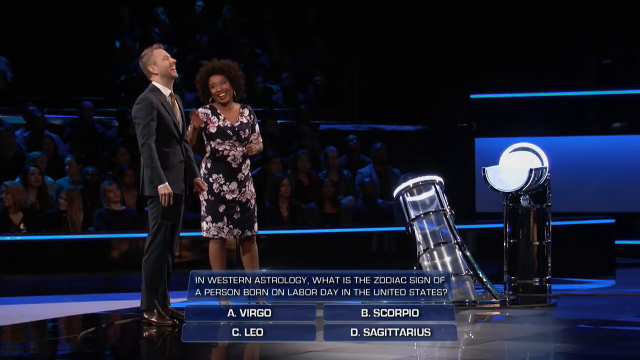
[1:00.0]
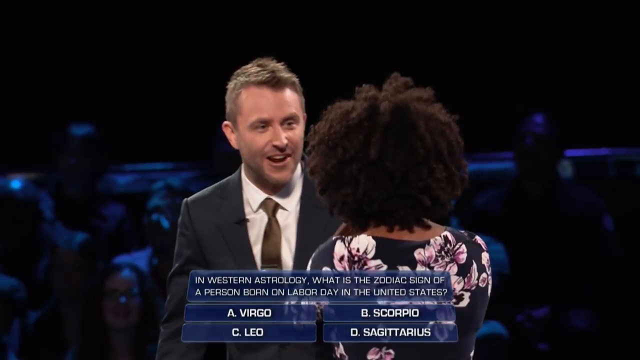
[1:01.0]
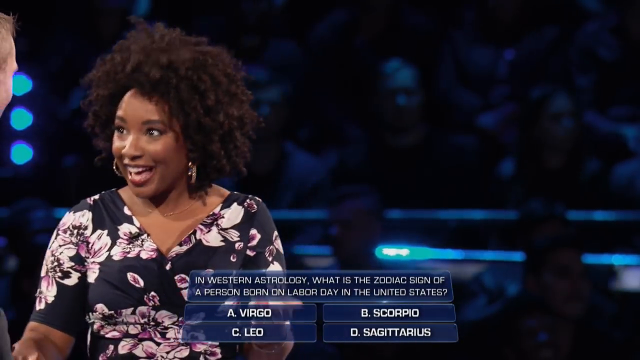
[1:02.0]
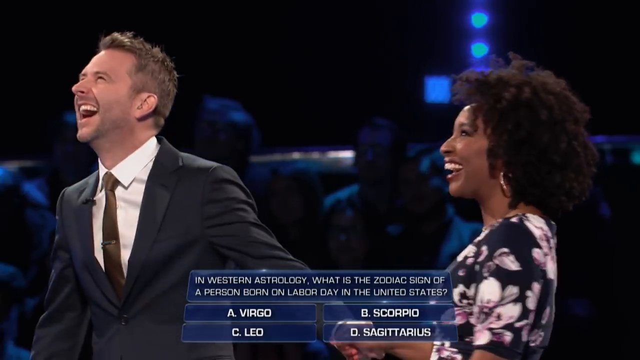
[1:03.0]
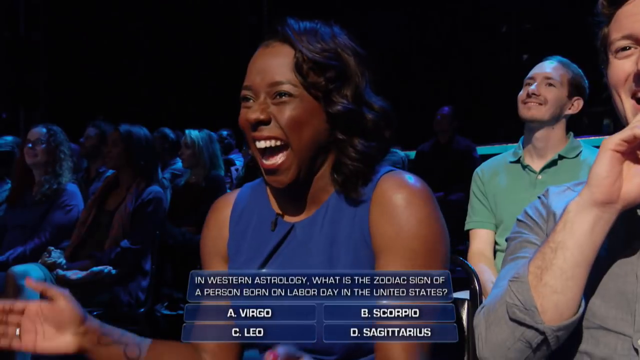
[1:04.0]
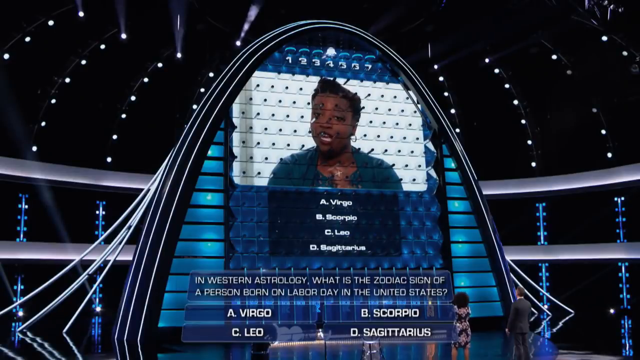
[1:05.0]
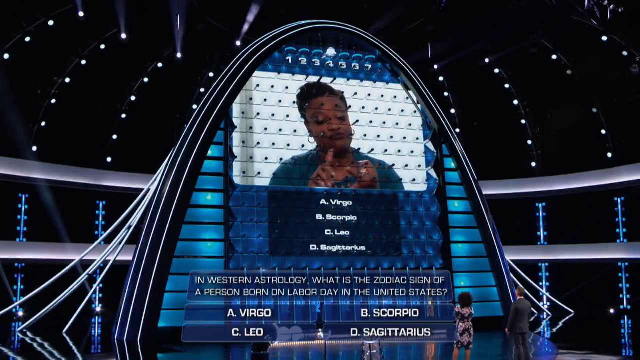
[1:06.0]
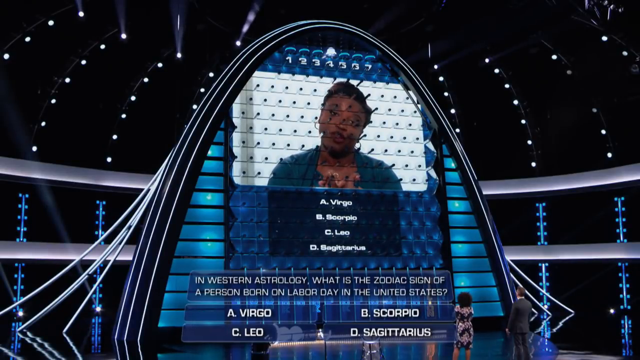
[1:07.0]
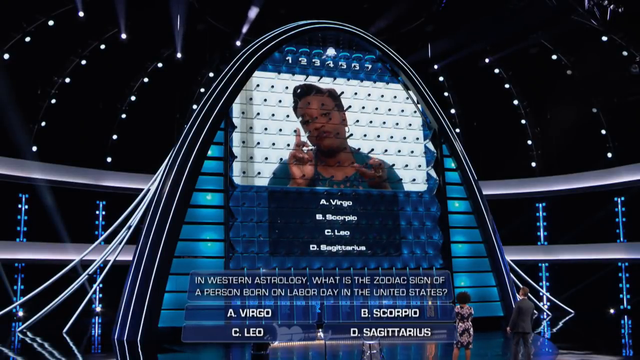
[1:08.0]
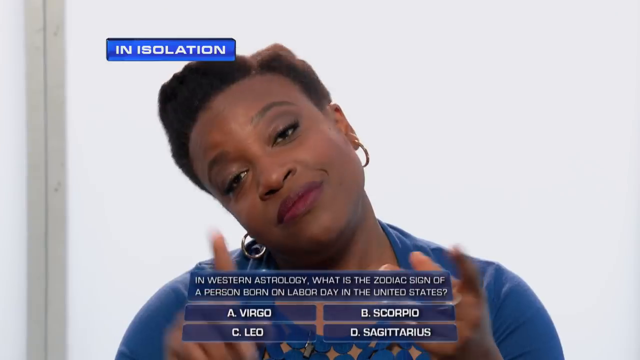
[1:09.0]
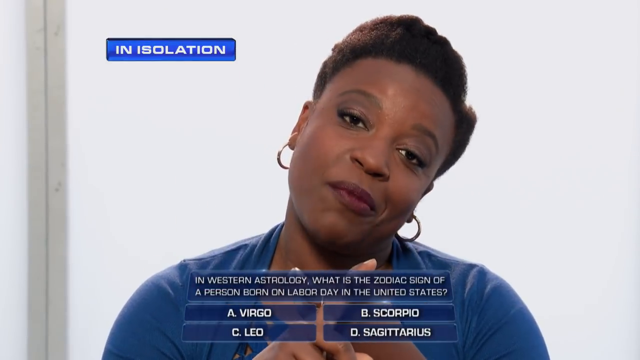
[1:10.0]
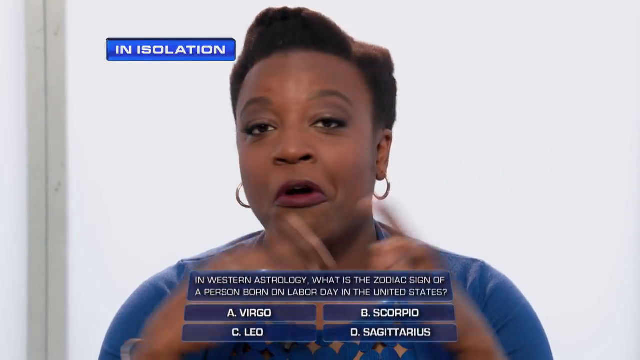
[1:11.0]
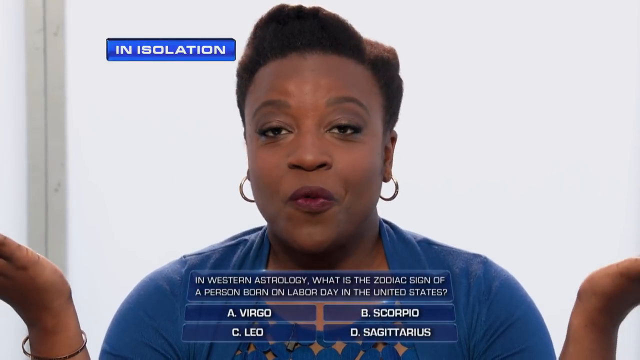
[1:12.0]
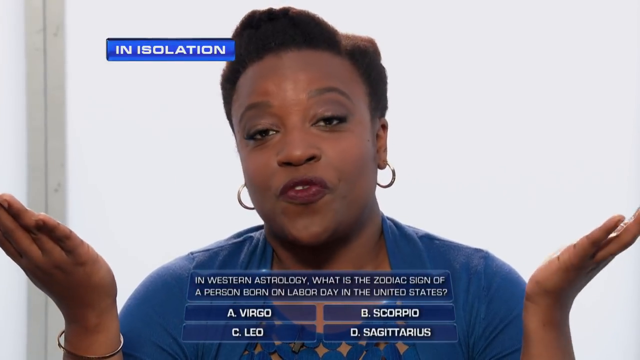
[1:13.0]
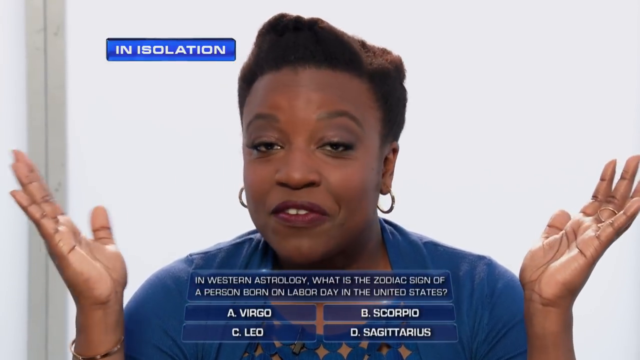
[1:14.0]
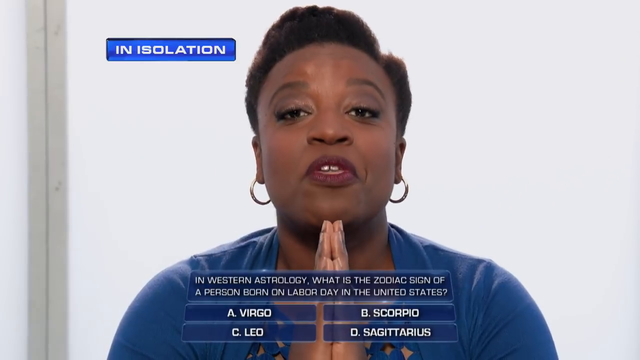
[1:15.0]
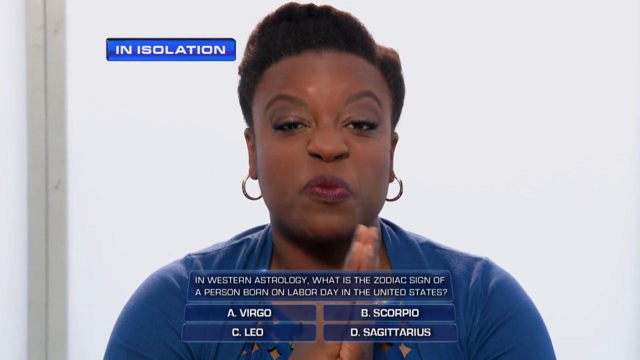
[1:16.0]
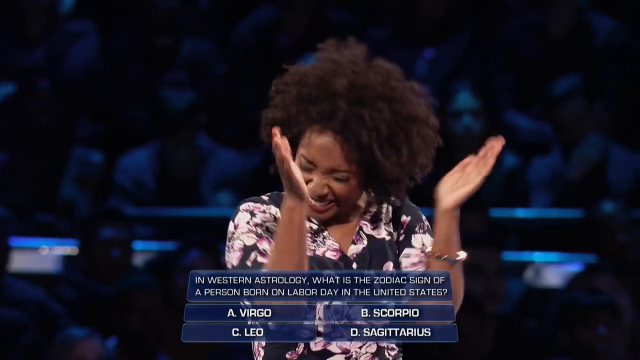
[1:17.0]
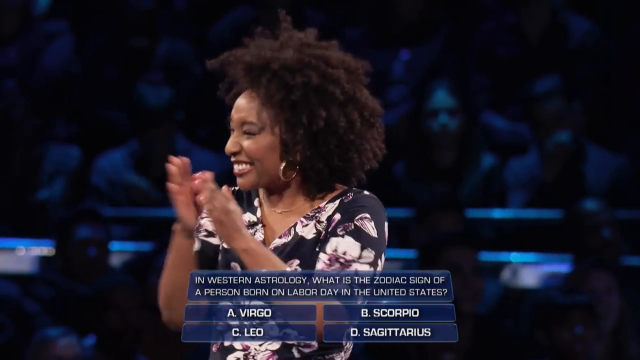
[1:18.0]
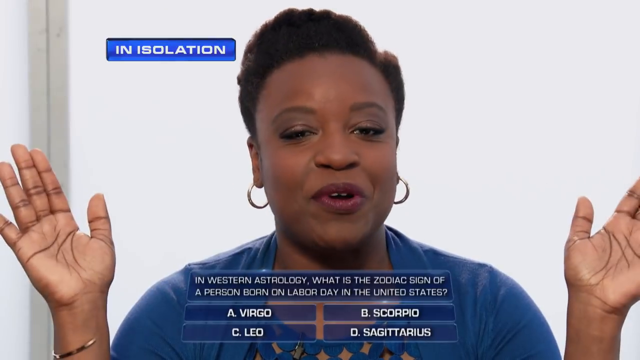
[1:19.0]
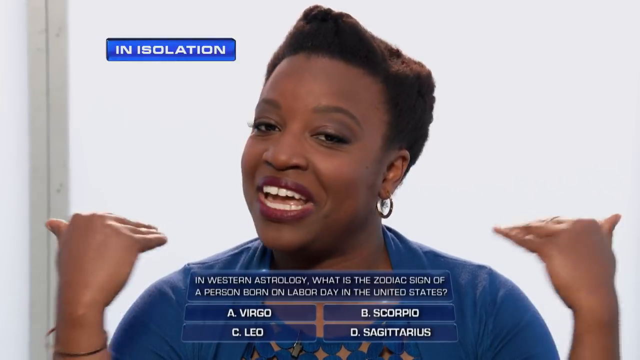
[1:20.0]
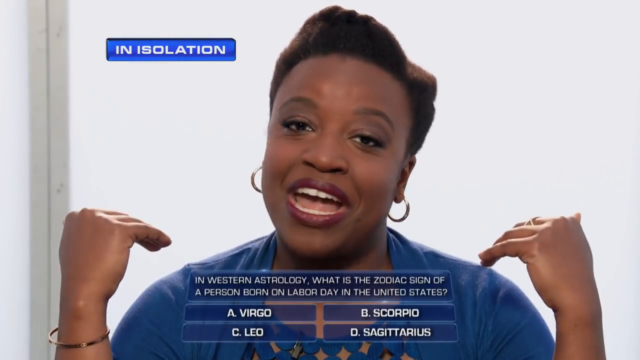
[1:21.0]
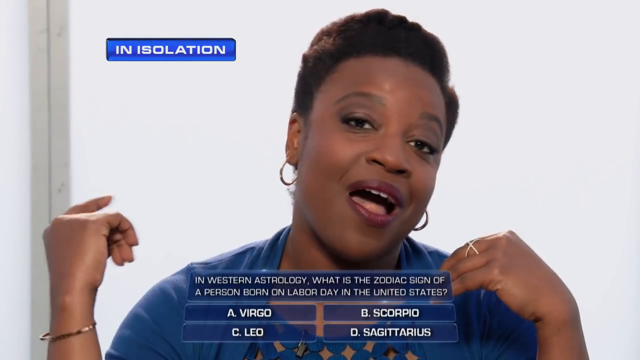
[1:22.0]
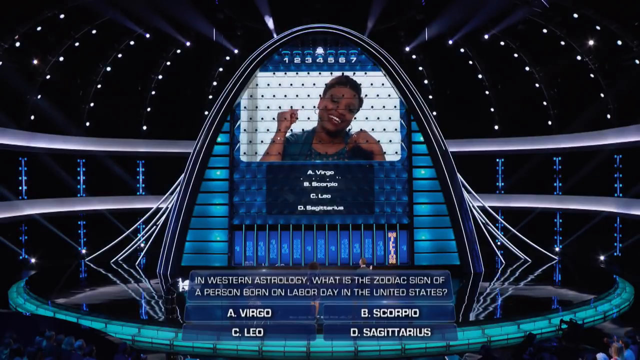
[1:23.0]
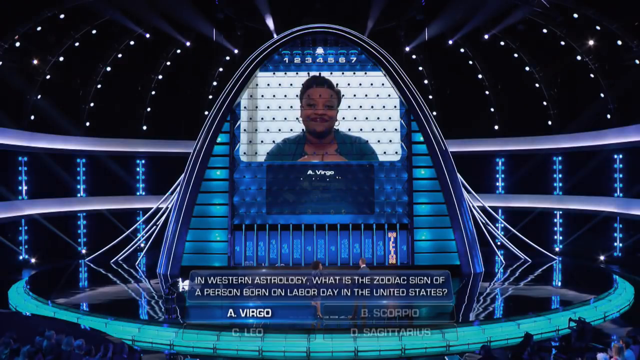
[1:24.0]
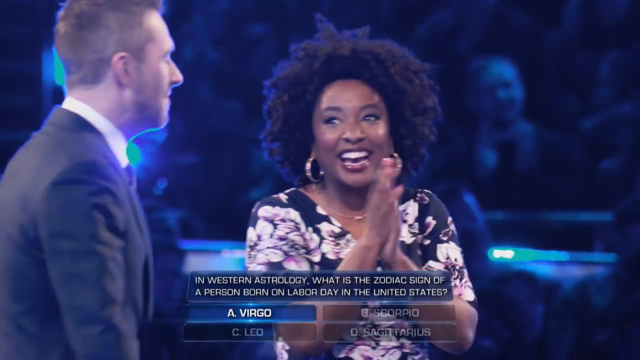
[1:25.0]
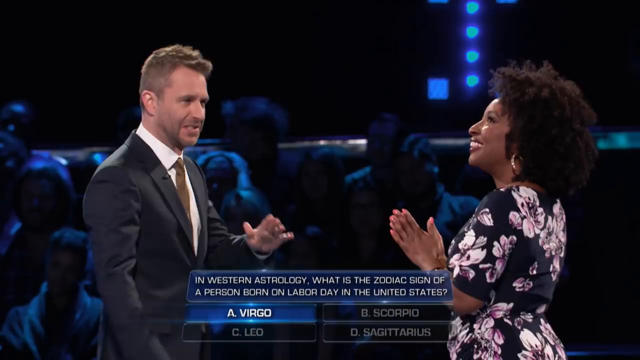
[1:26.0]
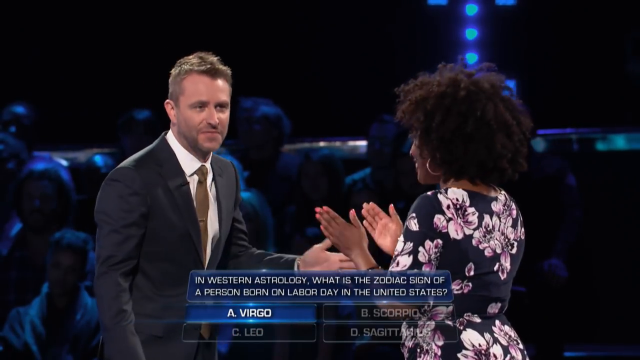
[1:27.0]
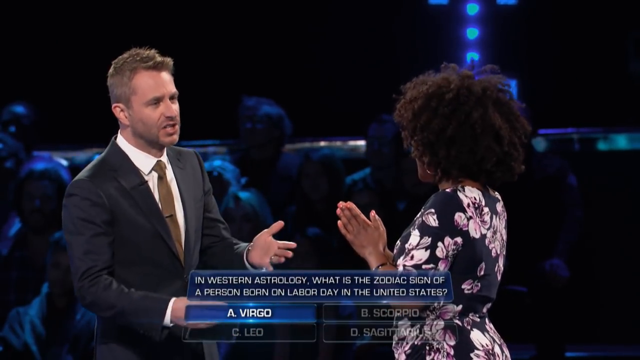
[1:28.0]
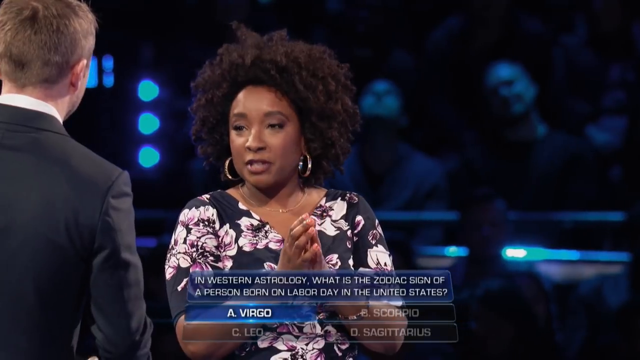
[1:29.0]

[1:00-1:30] The Black woman puts her hand on the talk show host's left shoulder as she speaks to him, and he speaks back to her. She says something, he laughs and she laughs too, and a couple of audience members laugh as well. The giant blue screen in front of them shows a video of the Black woman with short hair along with the multiple choices. In the video, the woman appears to be counting on her fingers; she makes an expression, talks, spreads her arms apart with palms facing upward, and then puts her palms together. The Black woman next to the host claps enthusiastically. The woman on the video screen keeps talking and making different gestures with her hands, while the woman next to the host keeps clapping and the host continues to talk, gesturing with his hands while still holding the notebook.